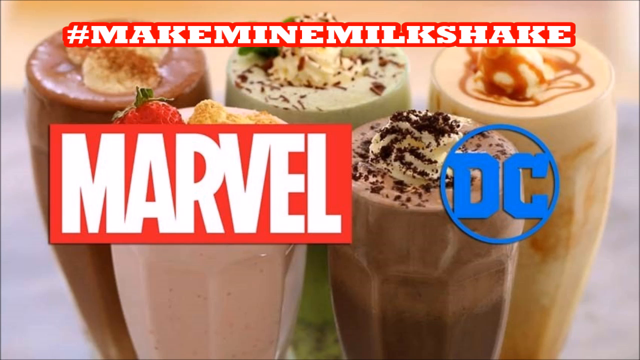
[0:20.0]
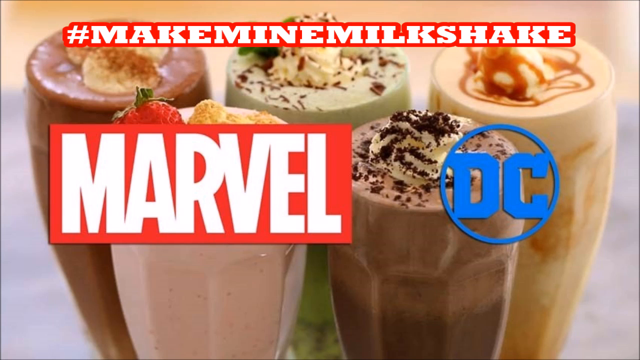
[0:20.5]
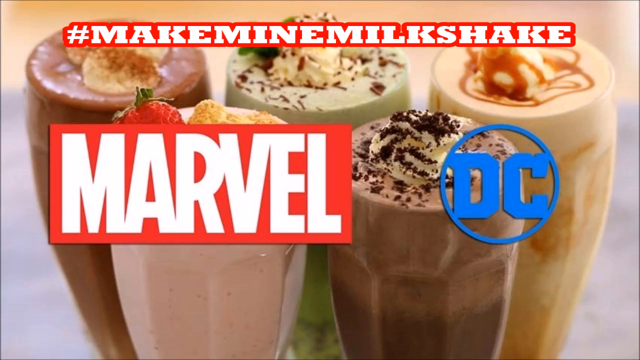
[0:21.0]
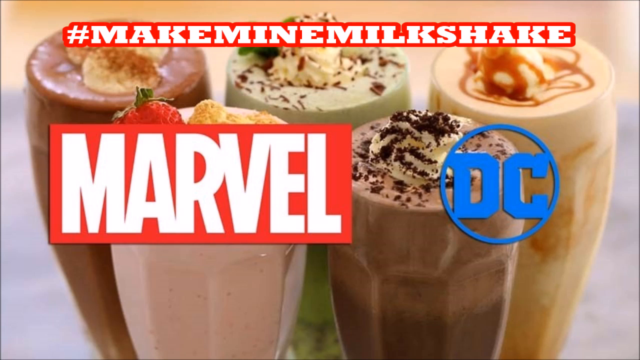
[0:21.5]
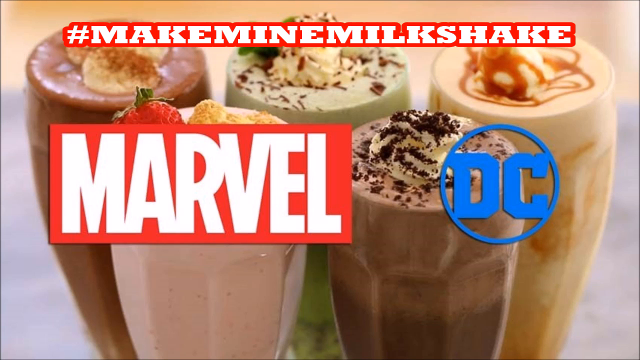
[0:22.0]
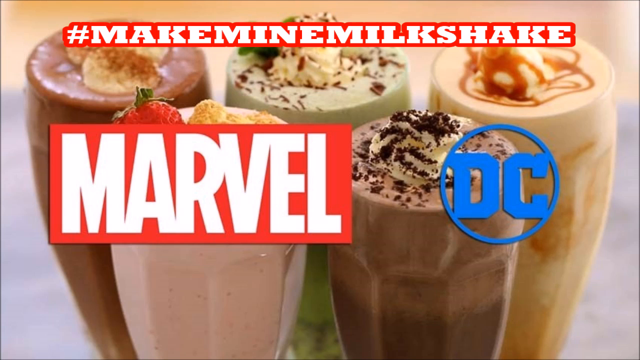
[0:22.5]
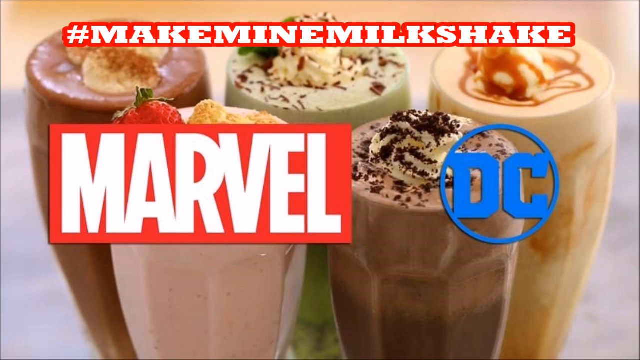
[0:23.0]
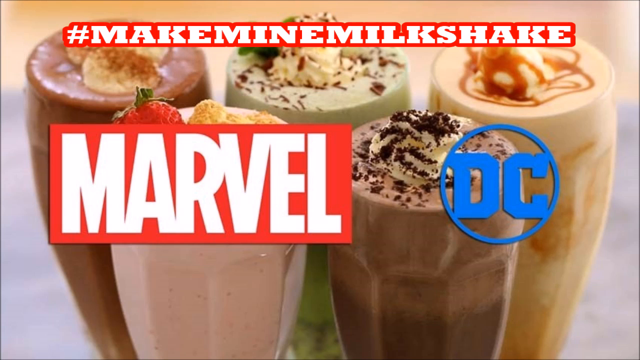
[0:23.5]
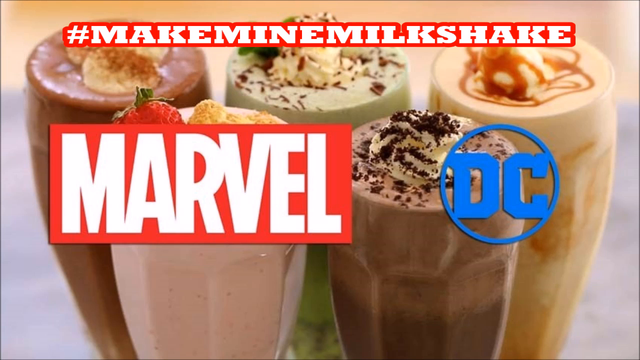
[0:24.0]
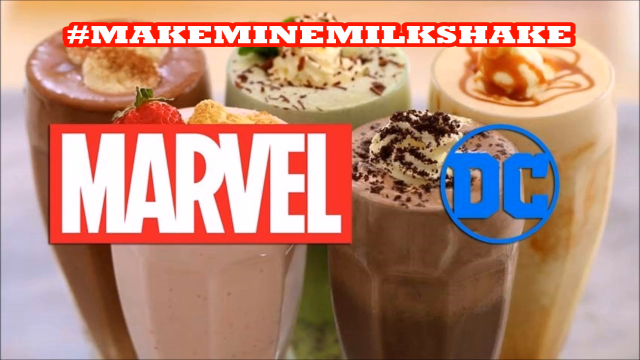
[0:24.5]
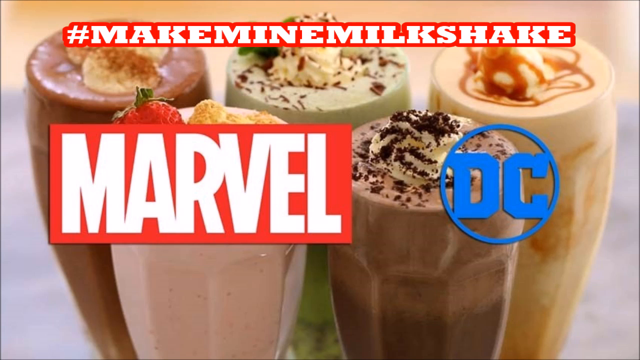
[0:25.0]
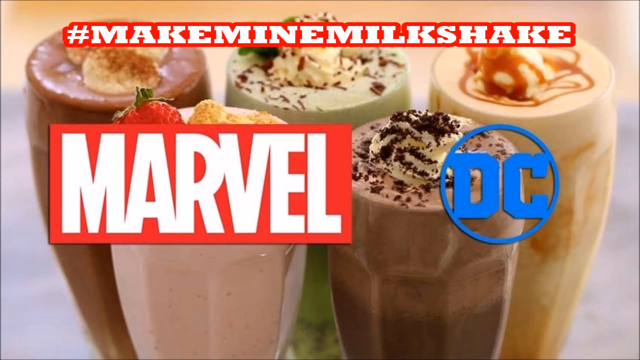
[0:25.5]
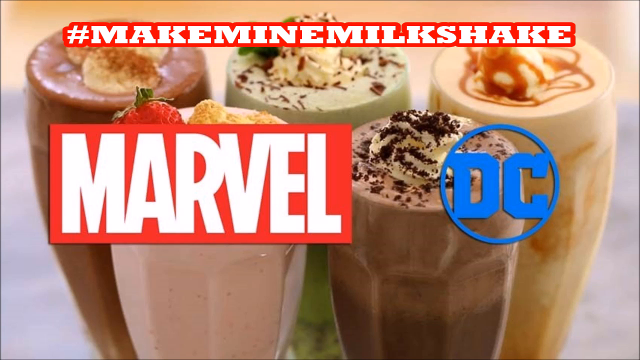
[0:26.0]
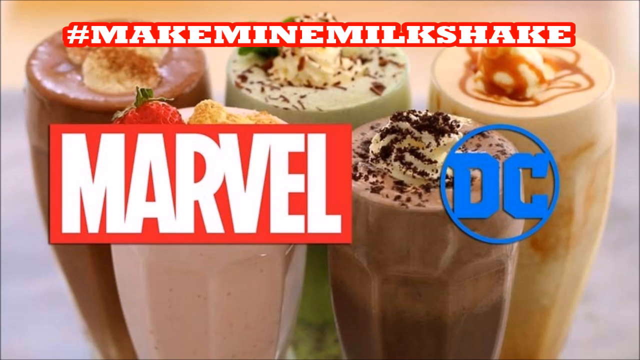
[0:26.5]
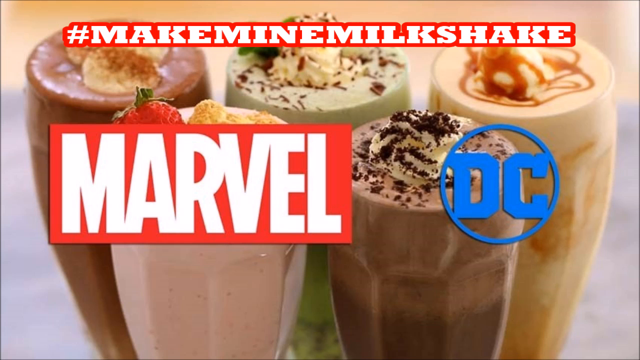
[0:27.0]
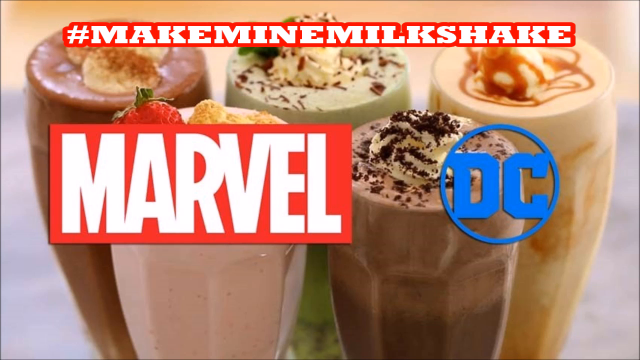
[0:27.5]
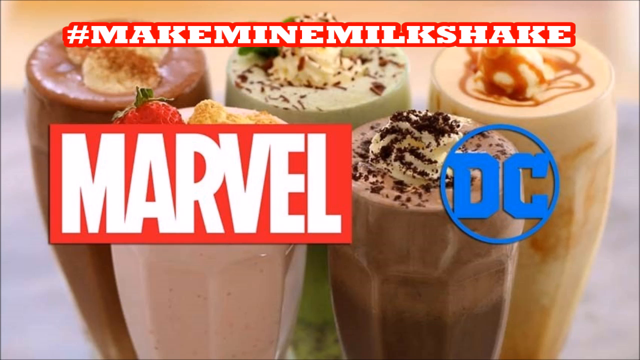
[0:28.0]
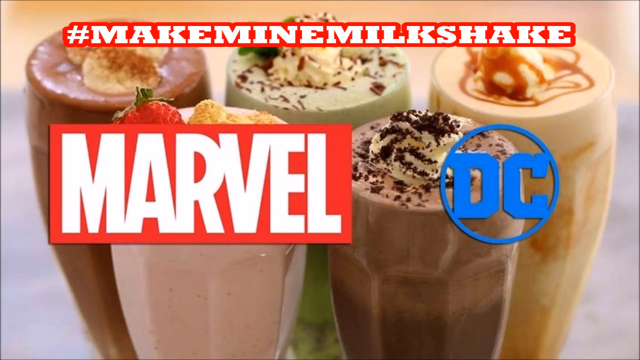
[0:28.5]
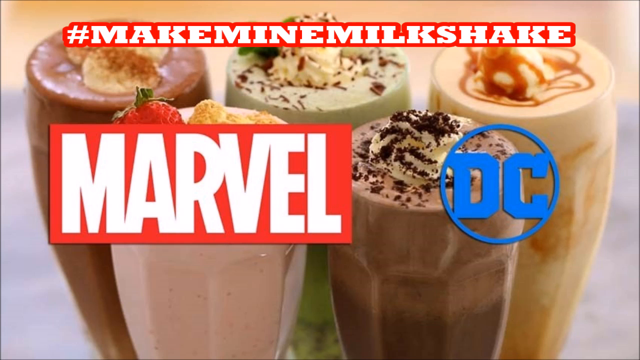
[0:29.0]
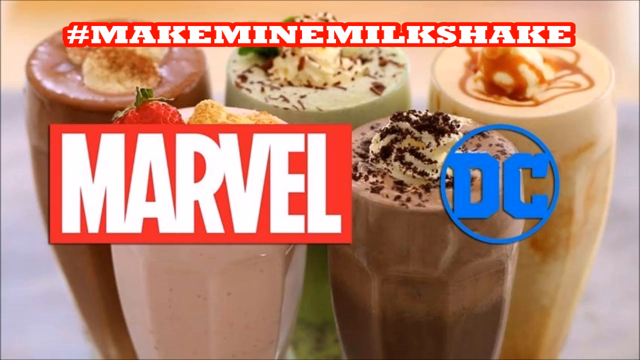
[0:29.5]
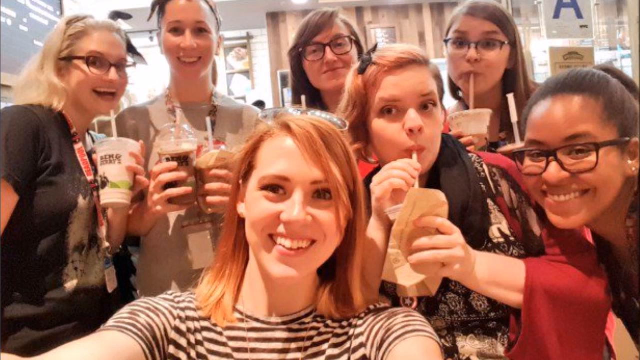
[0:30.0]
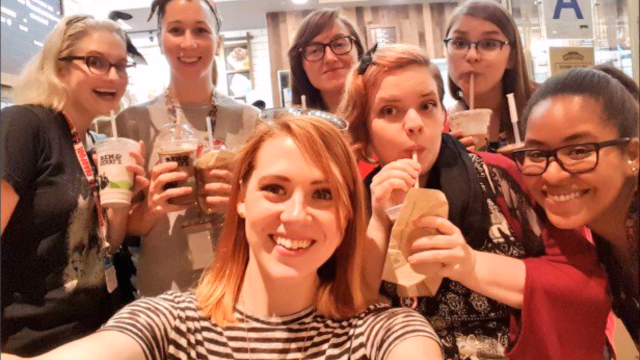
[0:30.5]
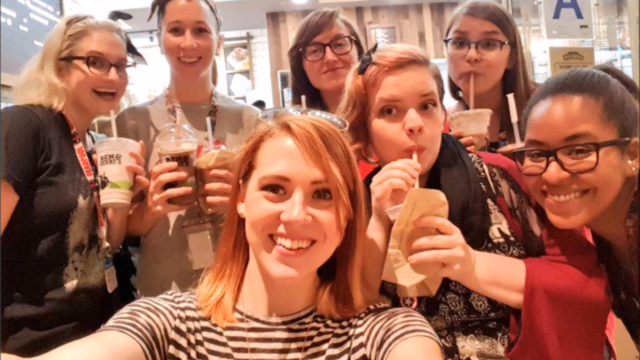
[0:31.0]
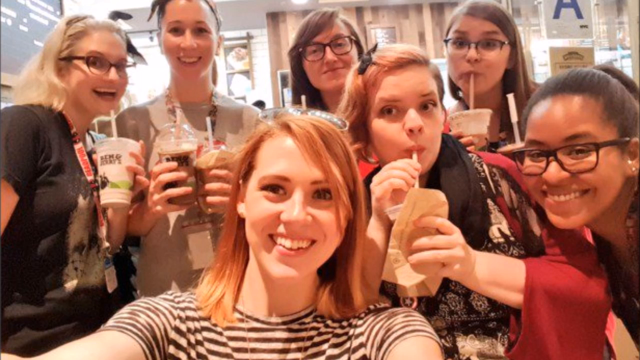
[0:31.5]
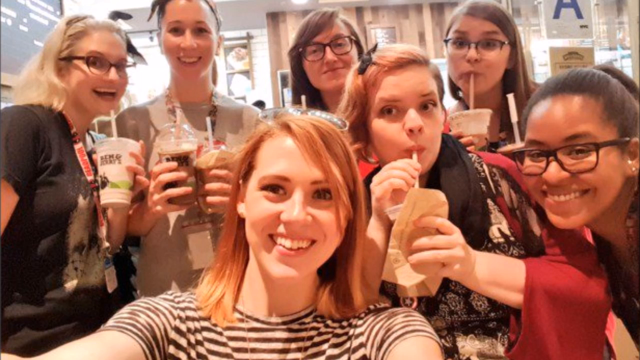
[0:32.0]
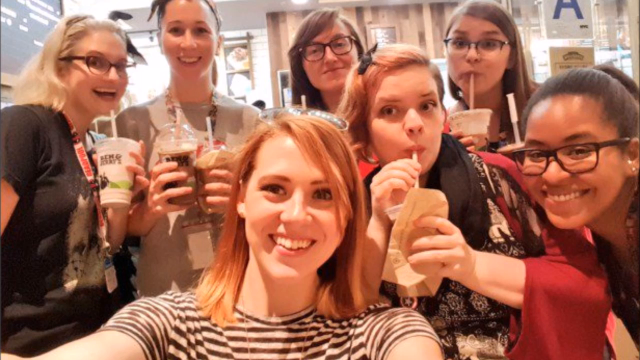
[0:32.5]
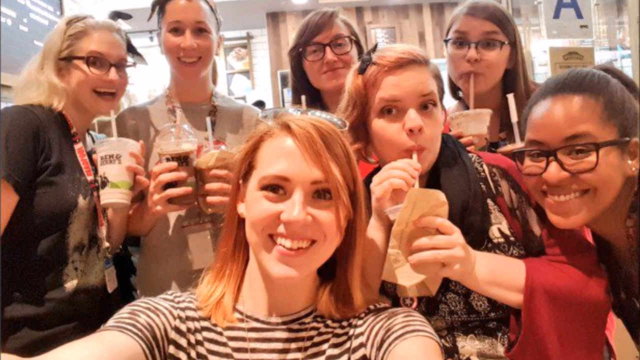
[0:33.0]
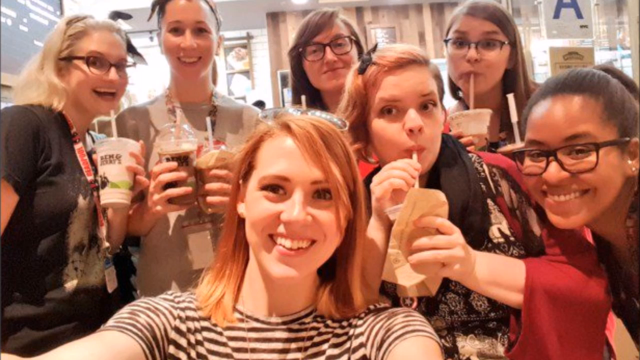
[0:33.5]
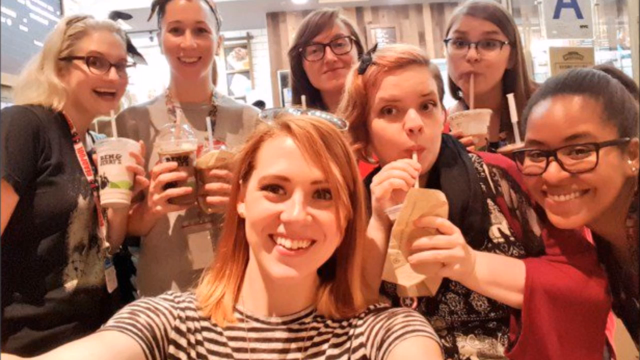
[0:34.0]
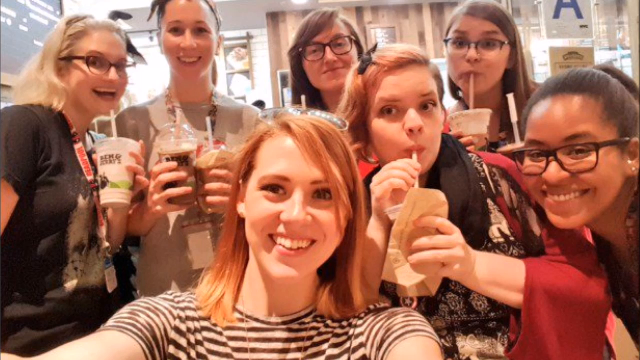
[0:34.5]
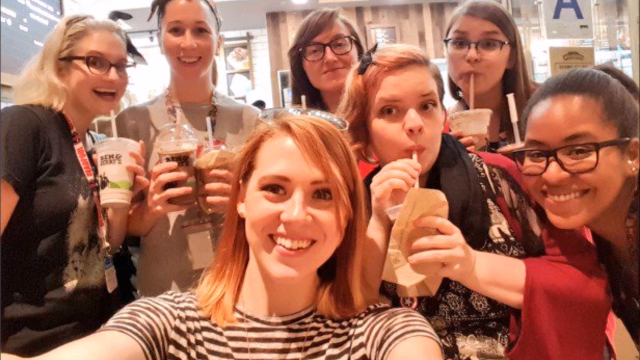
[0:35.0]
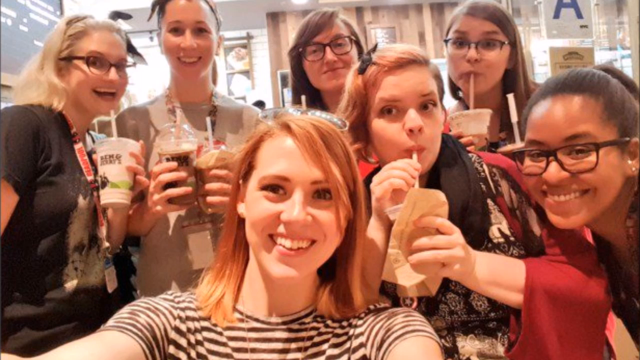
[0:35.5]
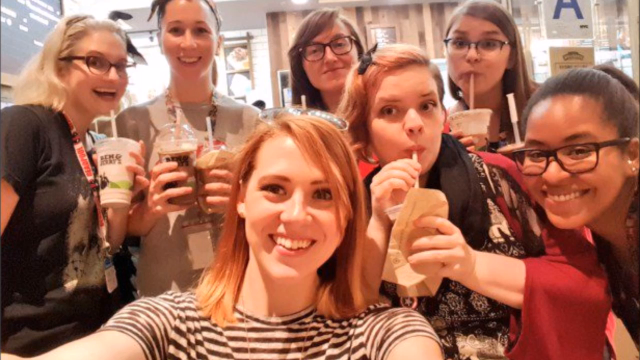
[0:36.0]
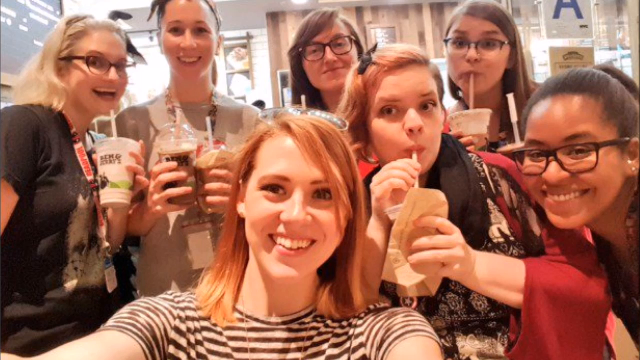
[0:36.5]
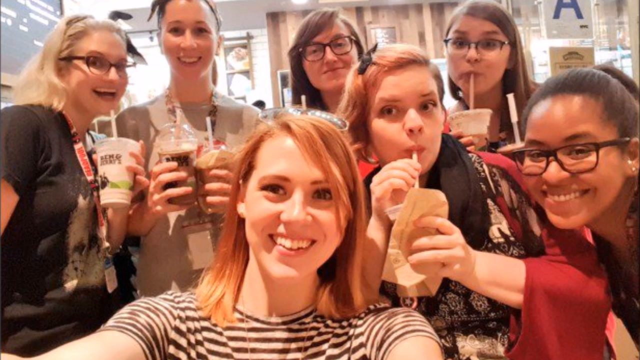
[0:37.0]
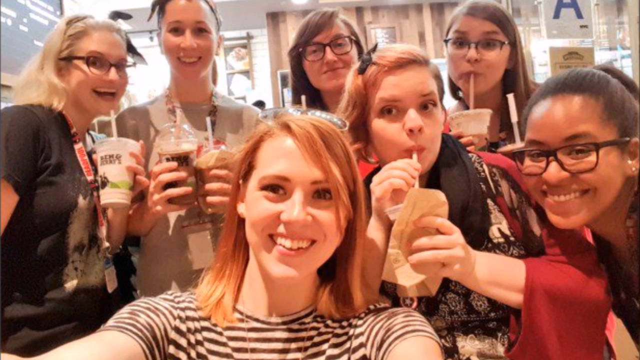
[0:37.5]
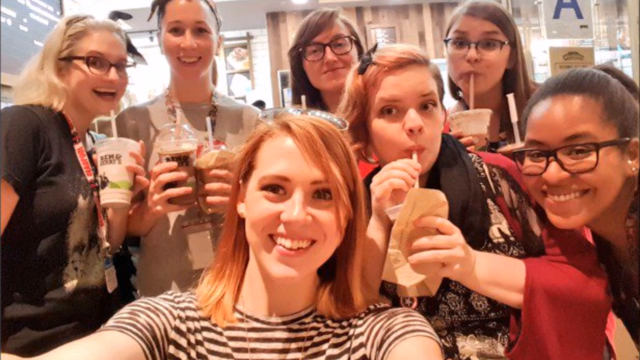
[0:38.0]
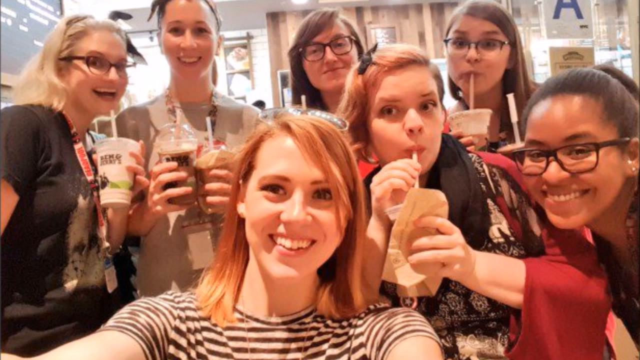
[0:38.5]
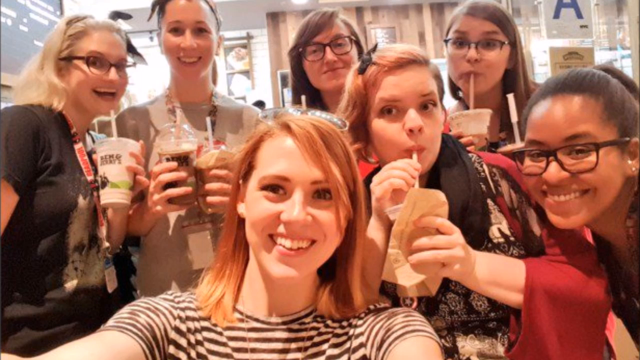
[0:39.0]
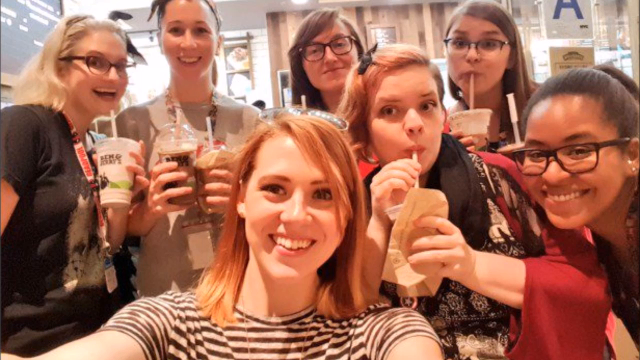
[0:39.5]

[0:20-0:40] The glasses of milkshake continue to be shown. The video then moves to seven women, all holding glasses and cups of milkshake. From the left, a Black woman wears glasses and earrings and has natural black hair. Next to her, in front, a white woman holds her cup and wears a red jersey and a black scarf. In the front, a woman is seated wearing a brown striped t-shirt. On the far right, a woman with white hair wears a black t-shirt and glasses. Next to her, a woman in a brown t-shirt holds two cups of milkshake. Next to her is a woman in glasses with brown hair. The last one, on the far left, wears glasses, carries a cup of milkshake and has long brown hair. The women seem to be in a restaurant where they got their milkshakes.